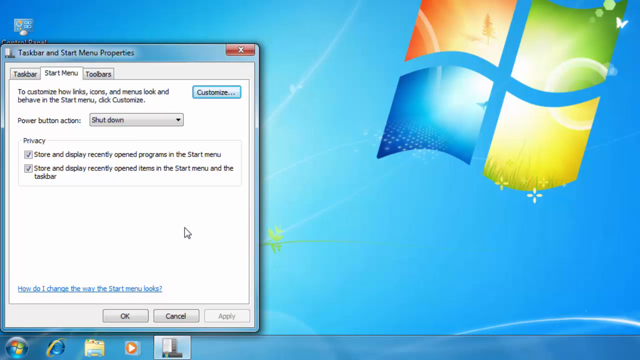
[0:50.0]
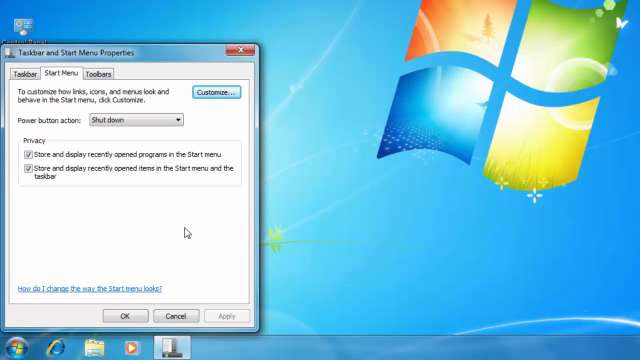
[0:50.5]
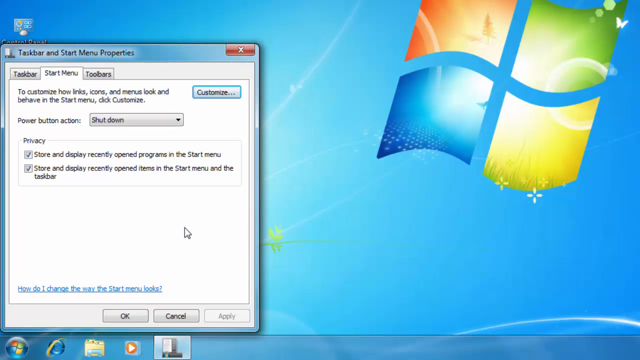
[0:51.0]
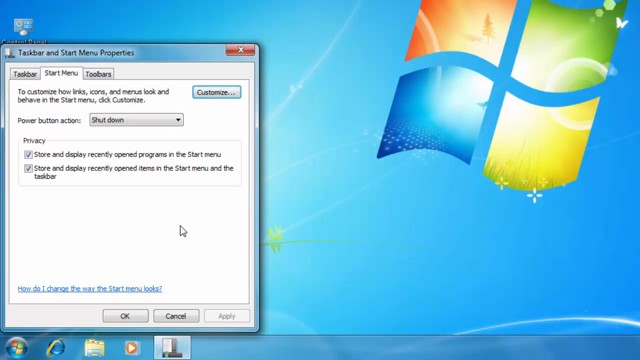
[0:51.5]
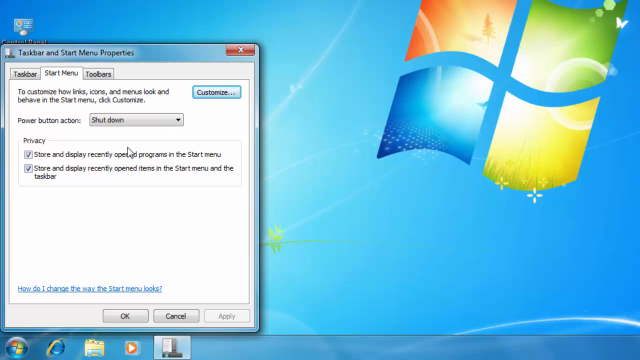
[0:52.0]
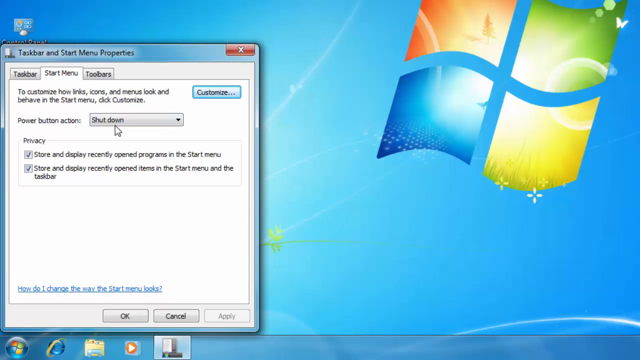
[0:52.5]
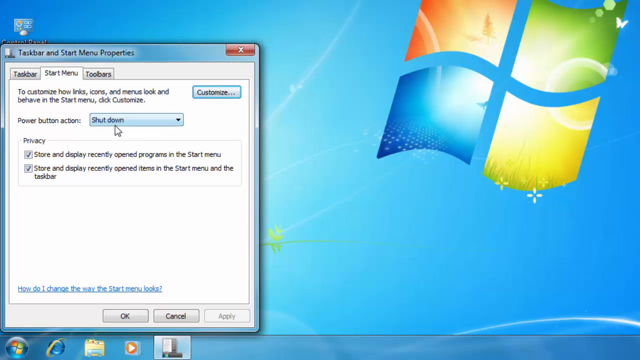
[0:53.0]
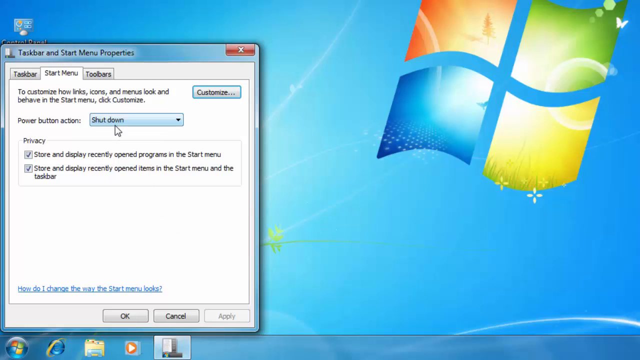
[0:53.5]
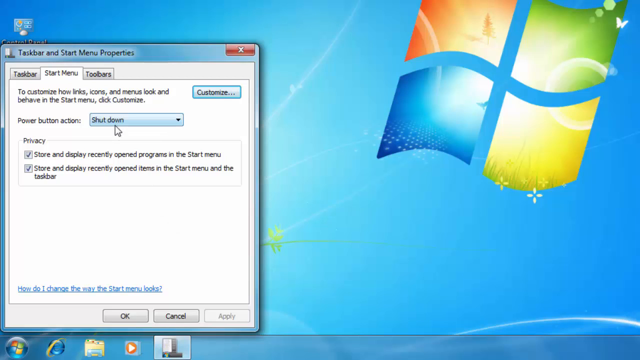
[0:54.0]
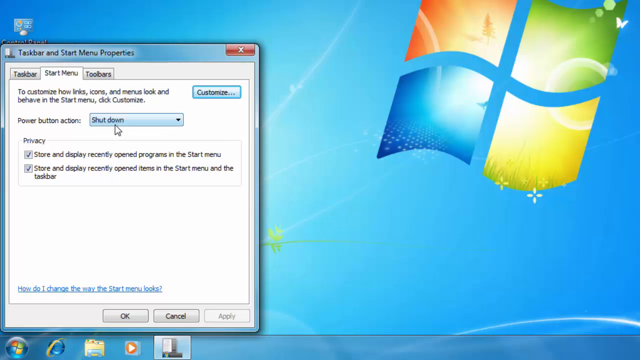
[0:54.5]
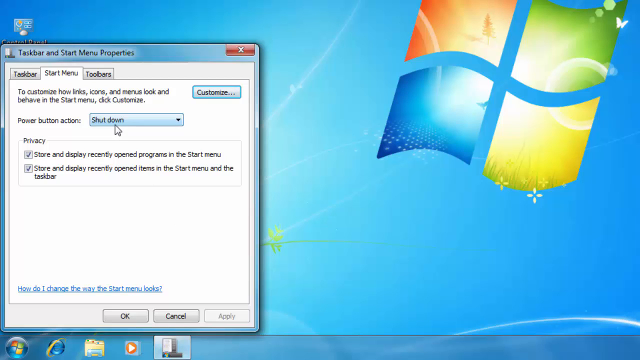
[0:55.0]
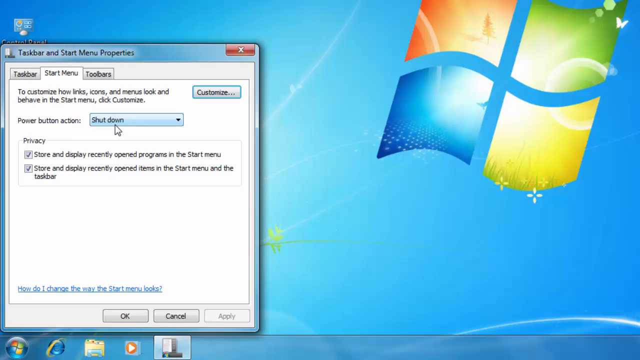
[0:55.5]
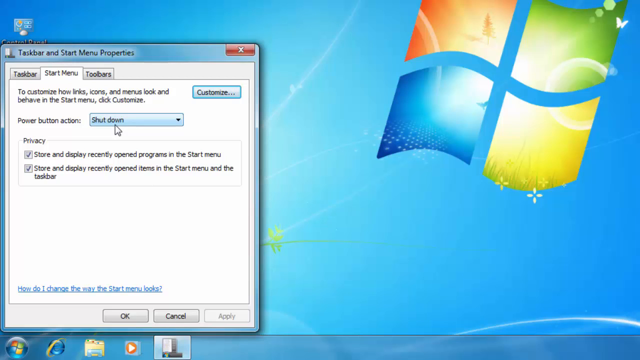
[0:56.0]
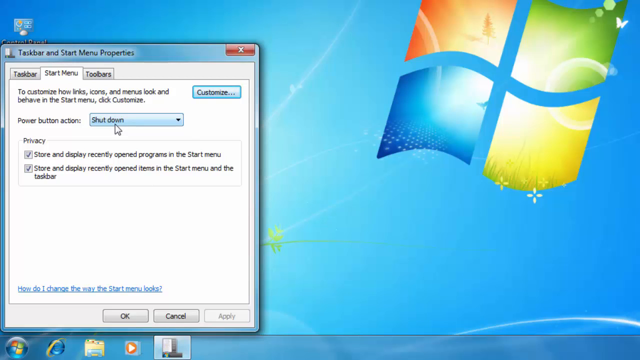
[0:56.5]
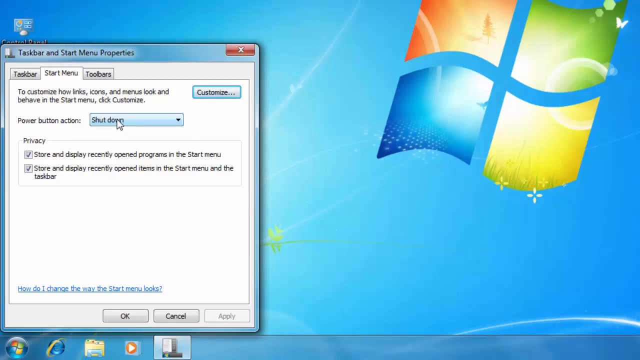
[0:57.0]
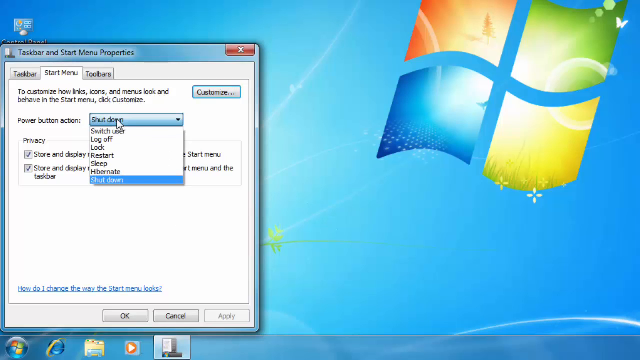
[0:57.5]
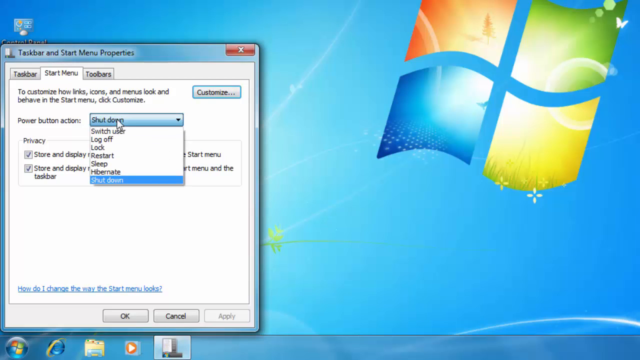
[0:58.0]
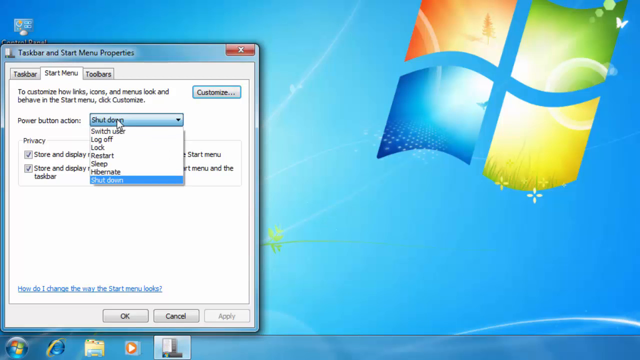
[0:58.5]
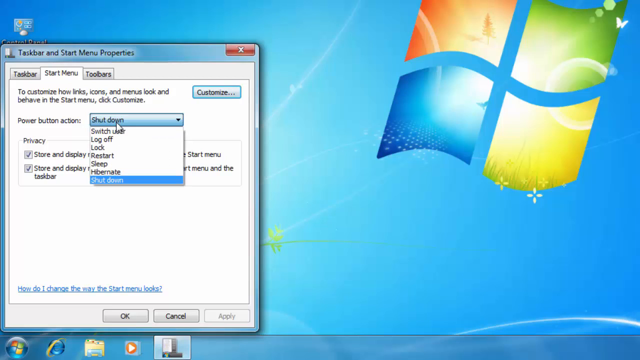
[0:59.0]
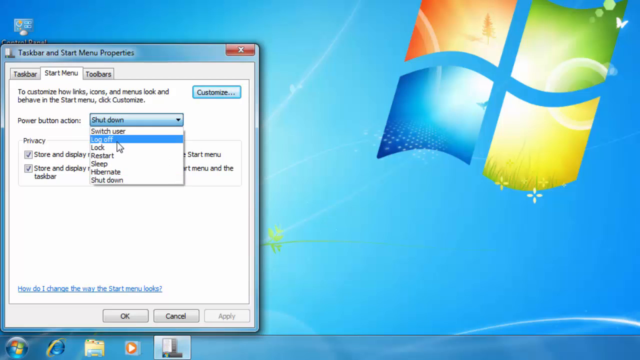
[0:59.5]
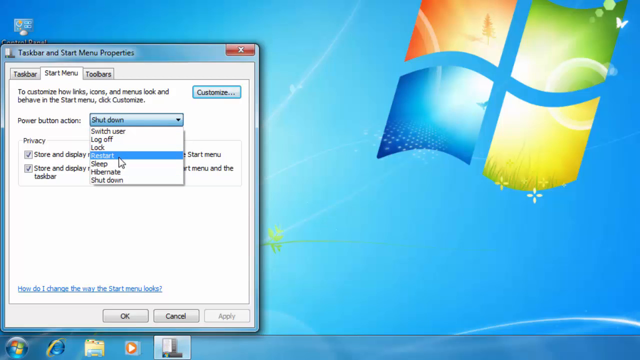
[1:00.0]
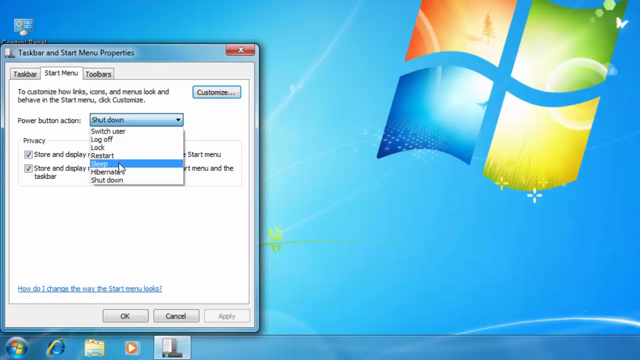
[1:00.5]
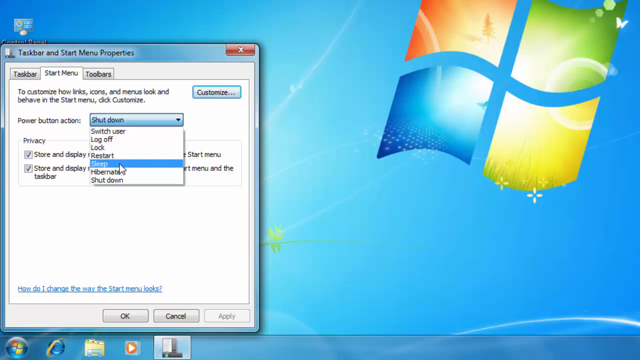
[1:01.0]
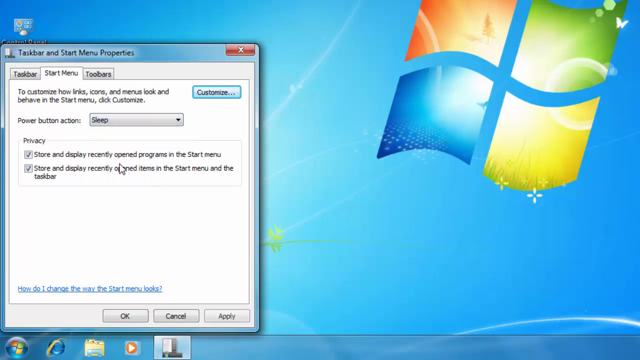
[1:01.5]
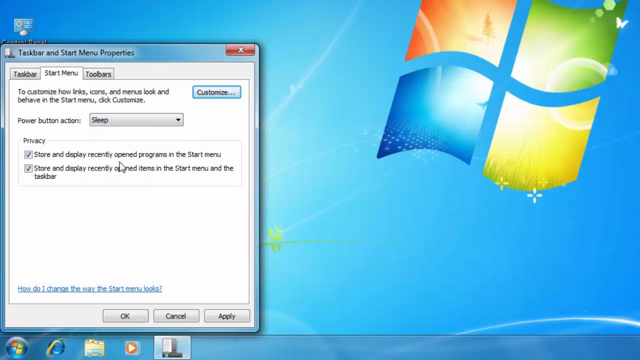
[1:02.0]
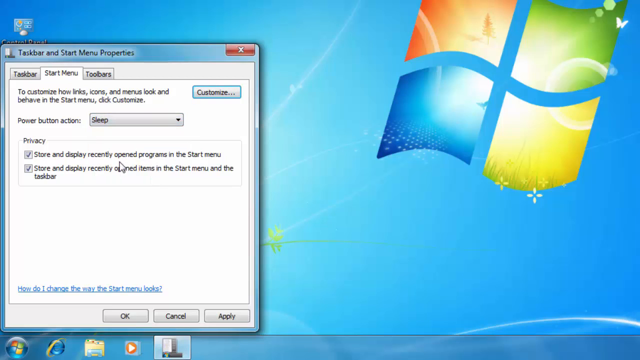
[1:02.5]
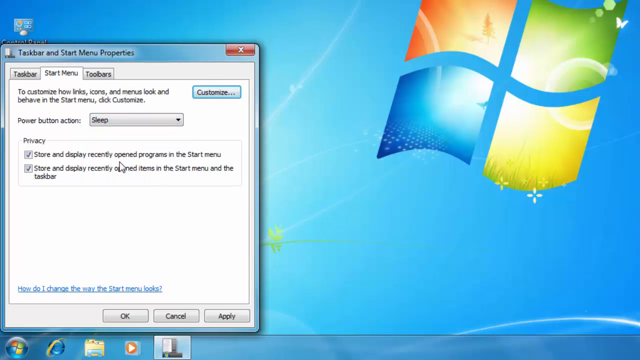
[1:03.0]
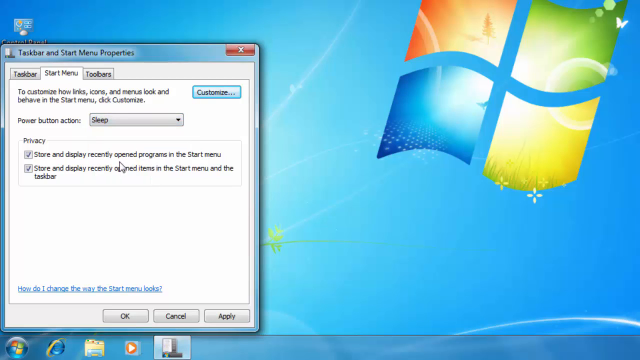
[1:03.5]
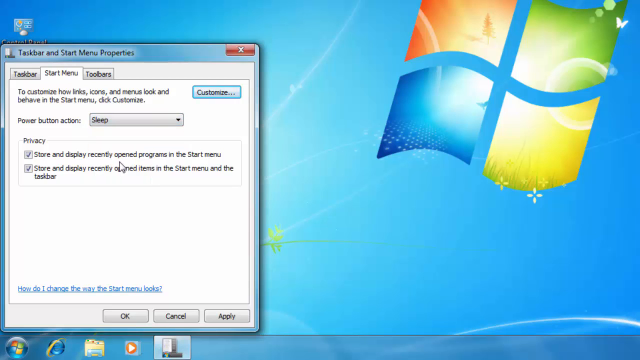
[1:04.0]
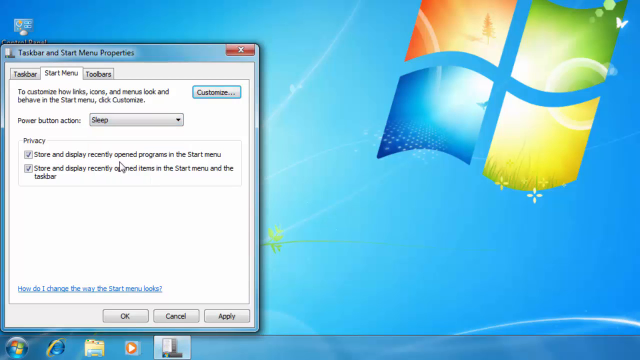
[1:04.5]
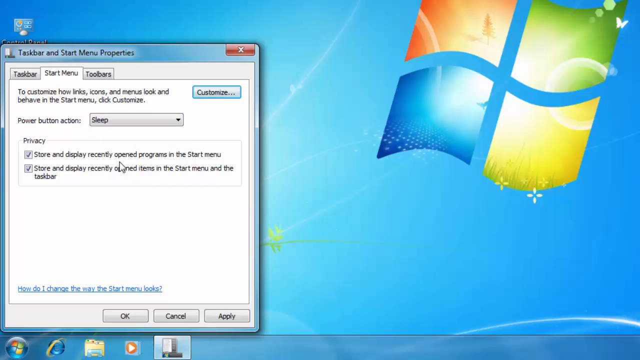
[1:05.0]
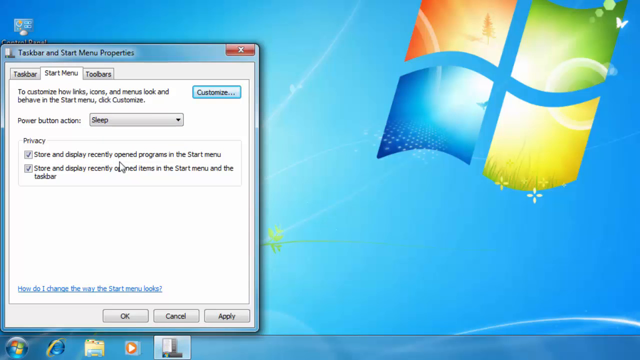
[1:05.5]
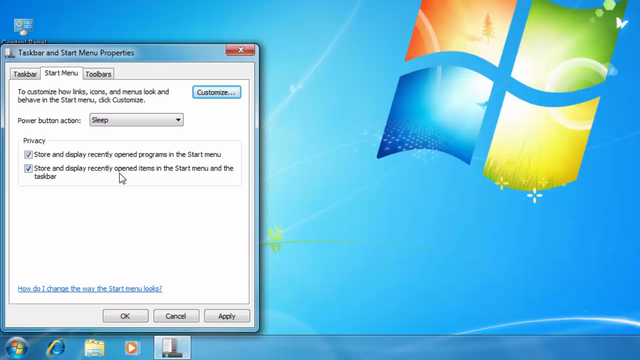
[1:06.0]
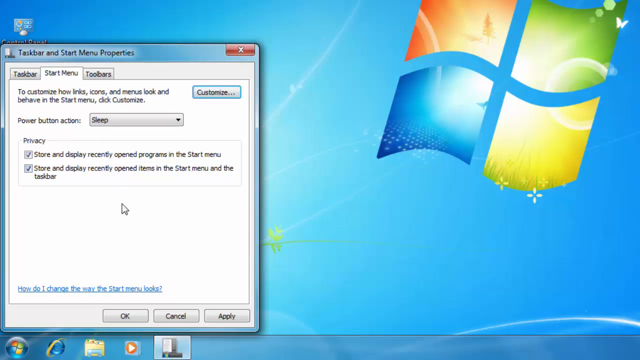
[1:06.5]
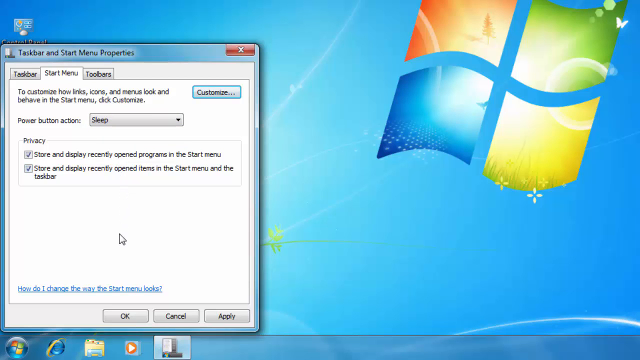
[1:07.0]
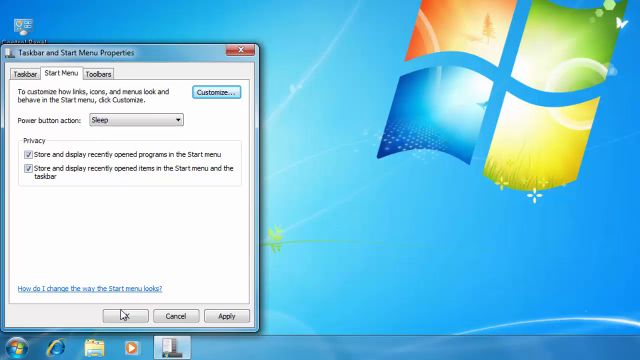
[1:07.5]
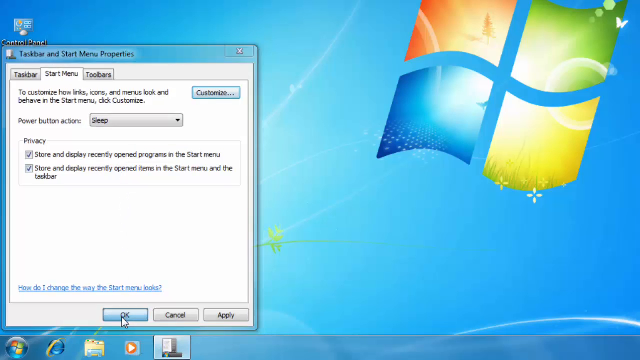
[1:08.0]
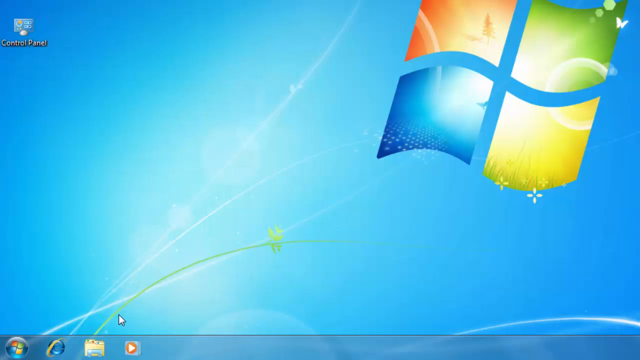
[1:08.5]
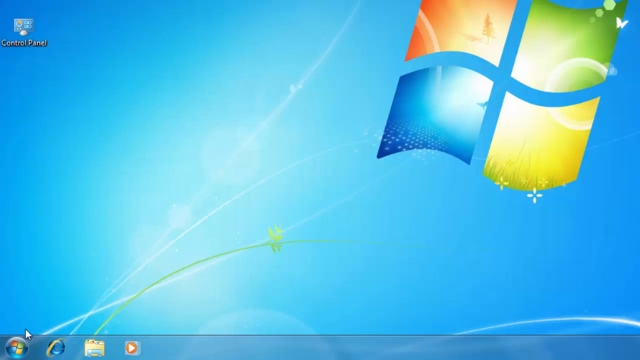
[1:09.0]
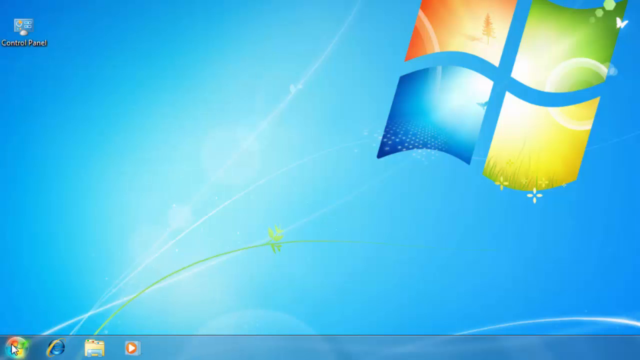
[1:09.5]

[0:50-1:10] The user goes to the power button's shutdown and clicks it, and options pop out: switch user, log off, lock, restart, sleep, hibernate and shutdown. At the top there is an option about customizing links, icons and menus in the Start menu. He clicks on sleep, and other options relating to displaying recently opened programs in the Start menu and recently opened items in the taskbar are clicked. The control panel logo is in the top left corner. The computer is not moving smoothly. The user opts for sleep, on what is apparently Windows 7.